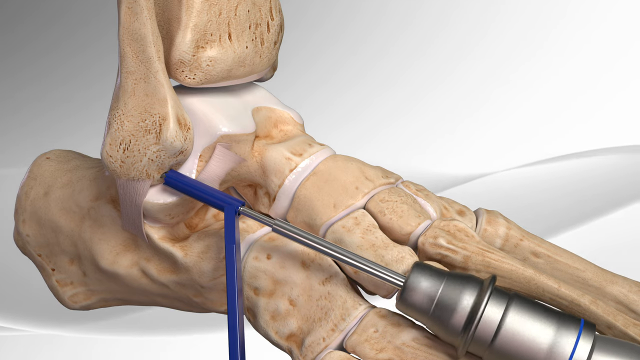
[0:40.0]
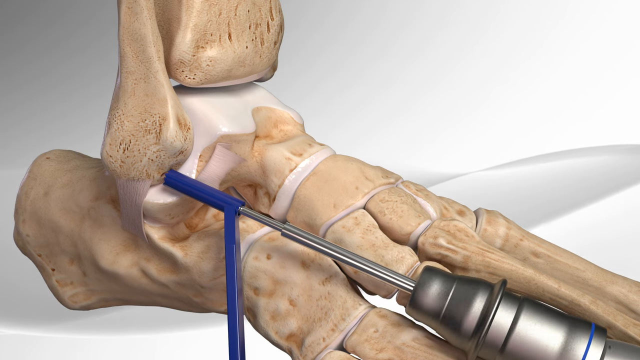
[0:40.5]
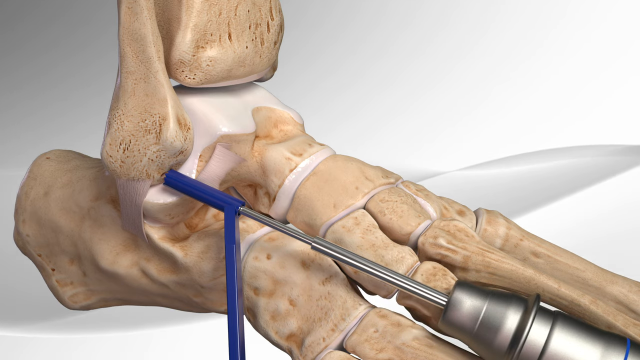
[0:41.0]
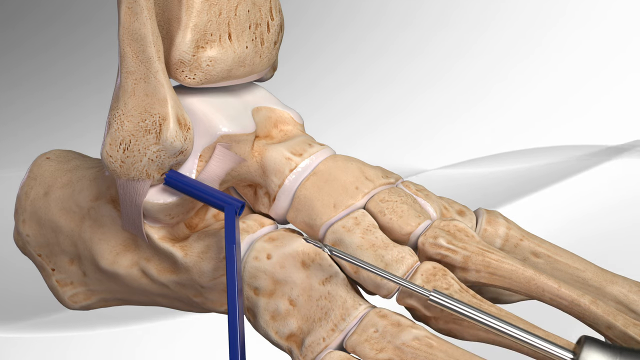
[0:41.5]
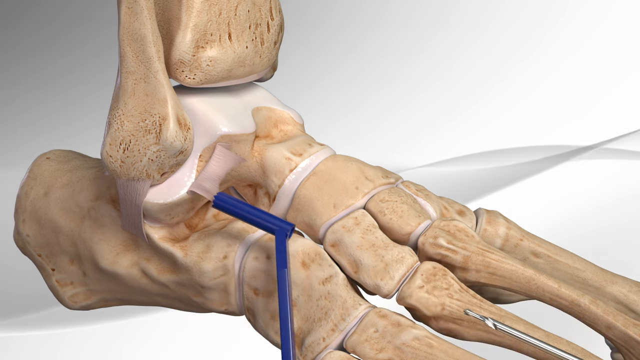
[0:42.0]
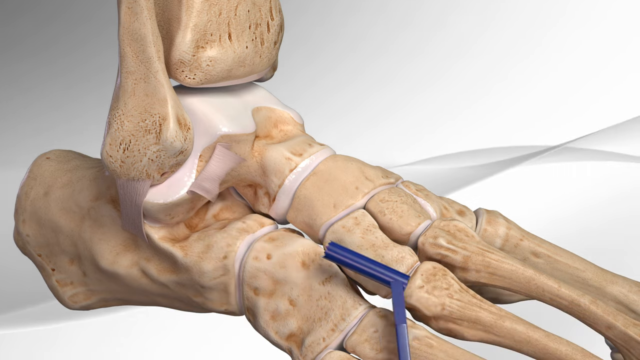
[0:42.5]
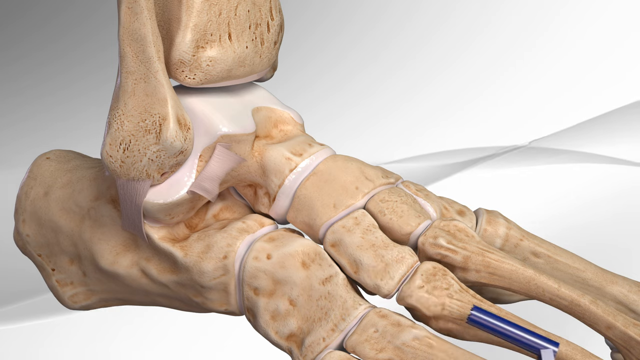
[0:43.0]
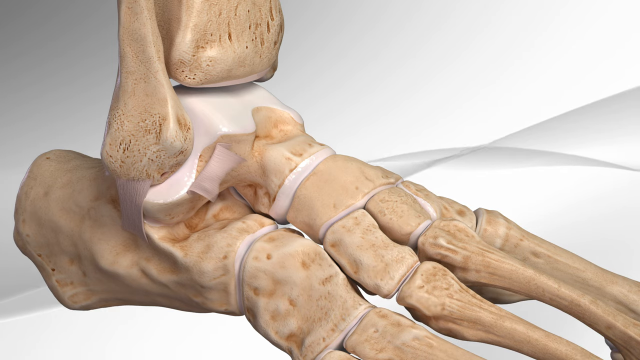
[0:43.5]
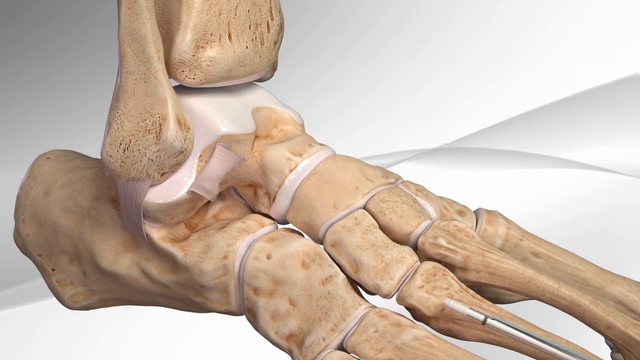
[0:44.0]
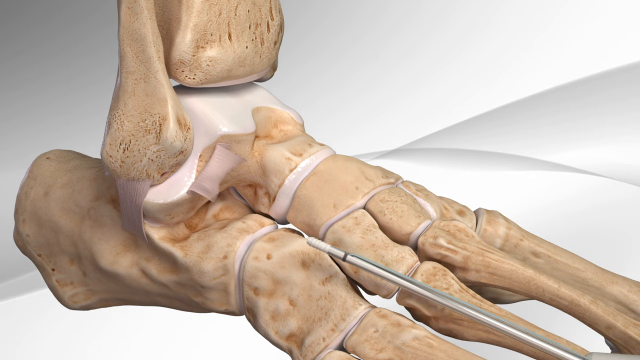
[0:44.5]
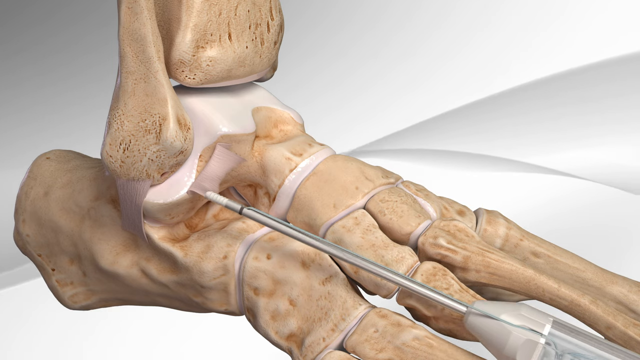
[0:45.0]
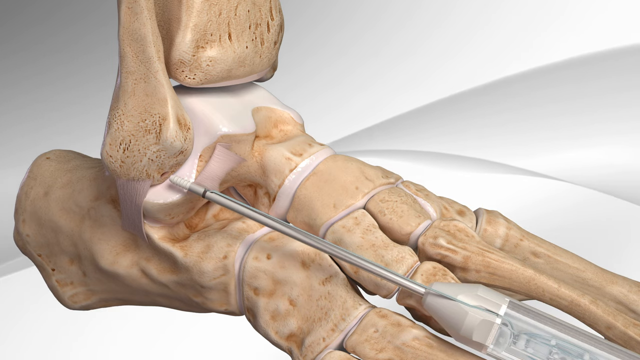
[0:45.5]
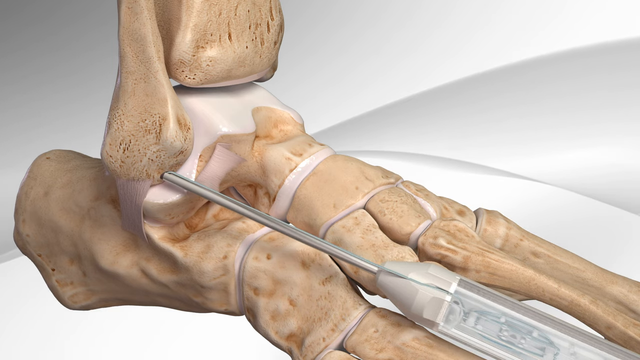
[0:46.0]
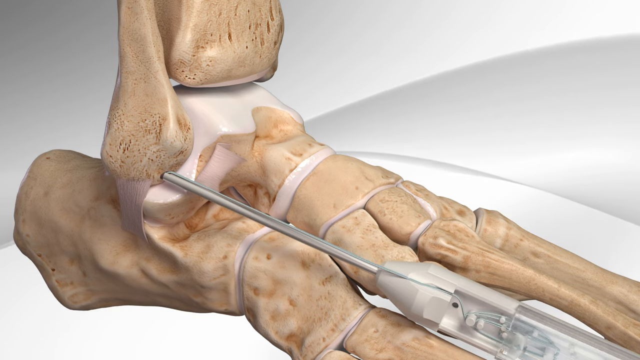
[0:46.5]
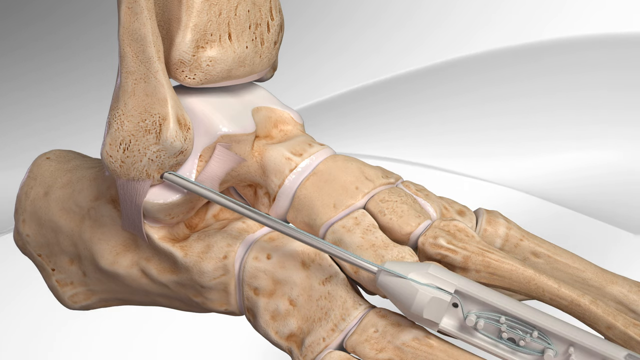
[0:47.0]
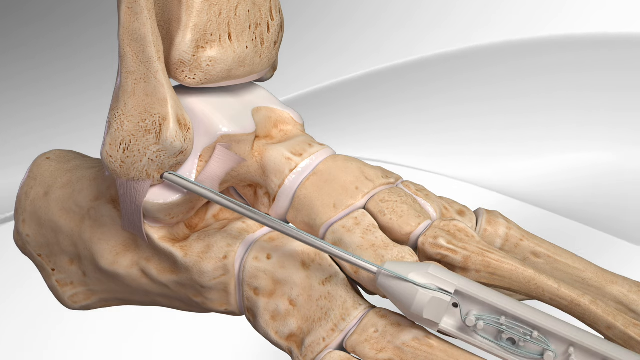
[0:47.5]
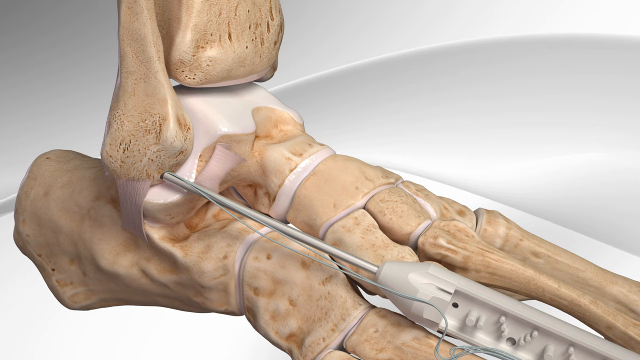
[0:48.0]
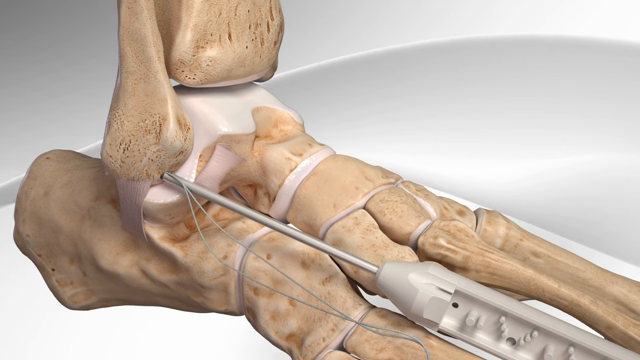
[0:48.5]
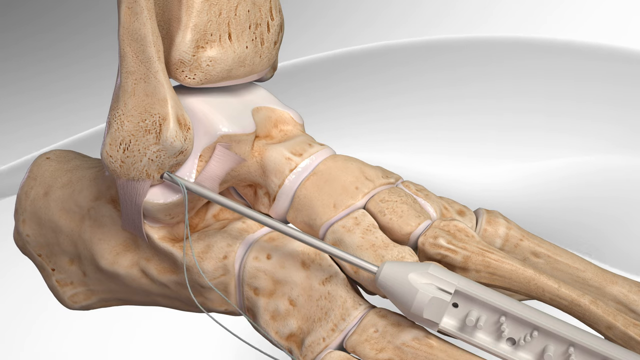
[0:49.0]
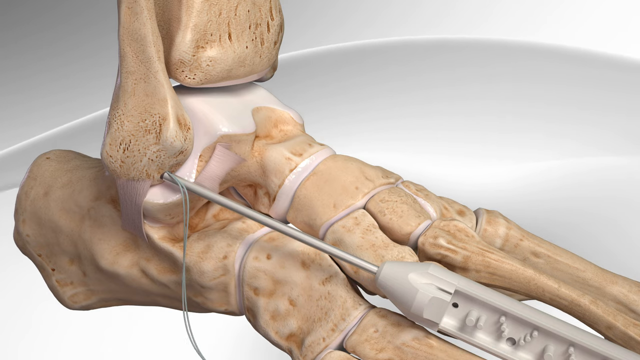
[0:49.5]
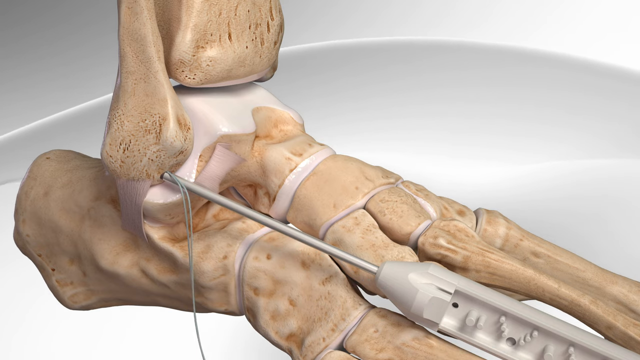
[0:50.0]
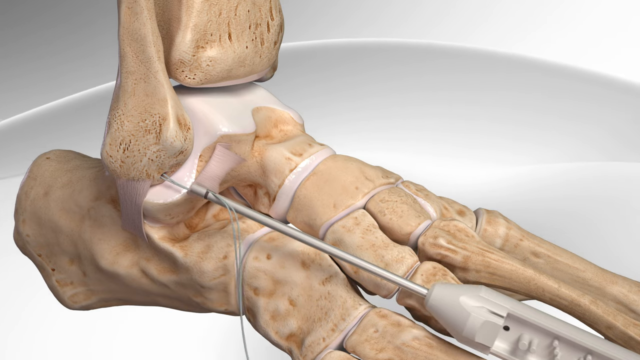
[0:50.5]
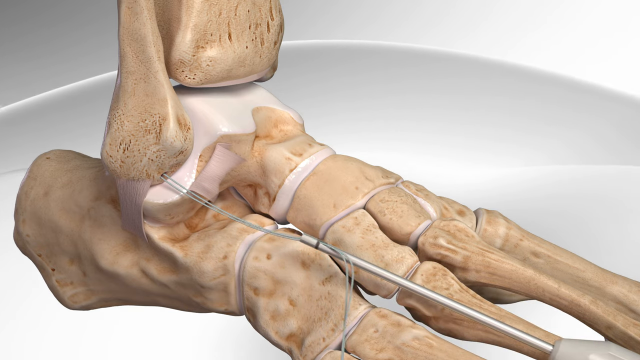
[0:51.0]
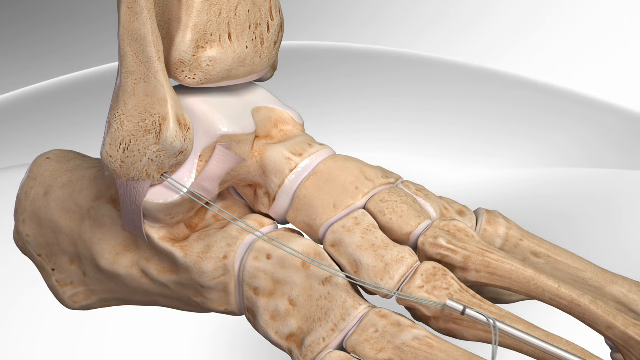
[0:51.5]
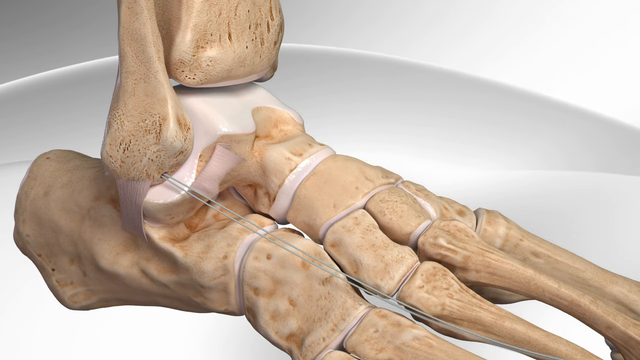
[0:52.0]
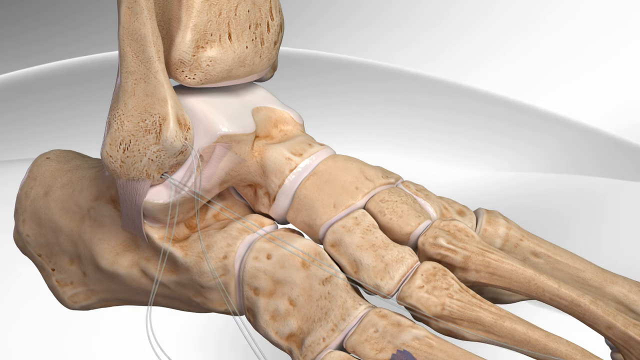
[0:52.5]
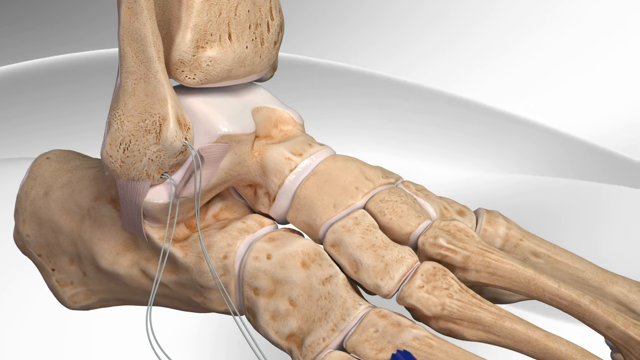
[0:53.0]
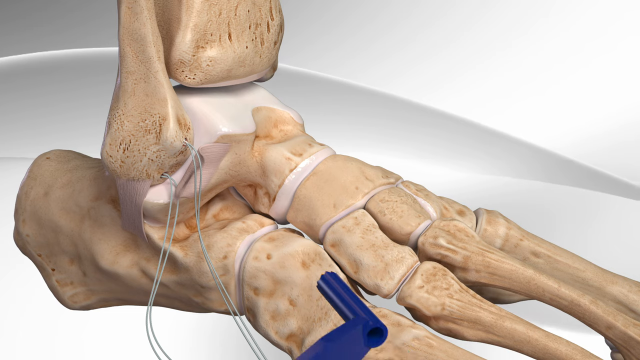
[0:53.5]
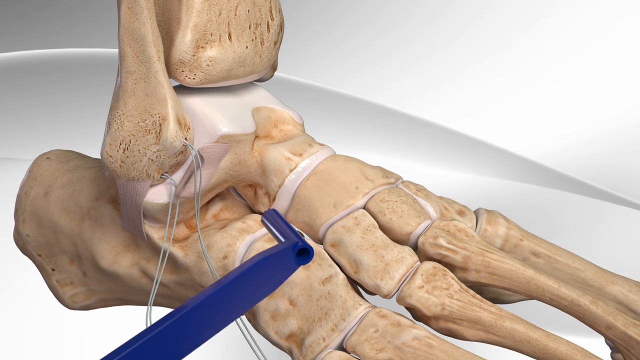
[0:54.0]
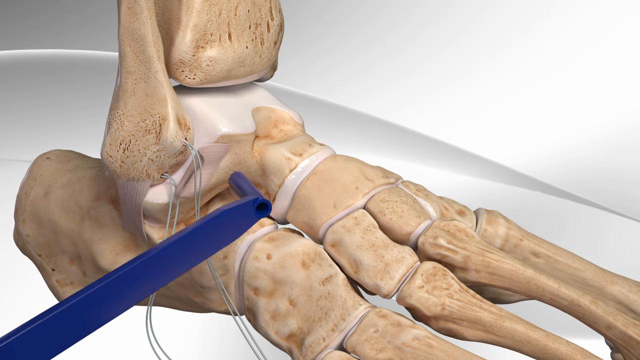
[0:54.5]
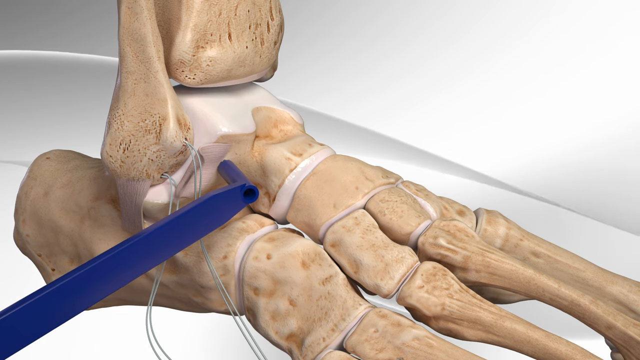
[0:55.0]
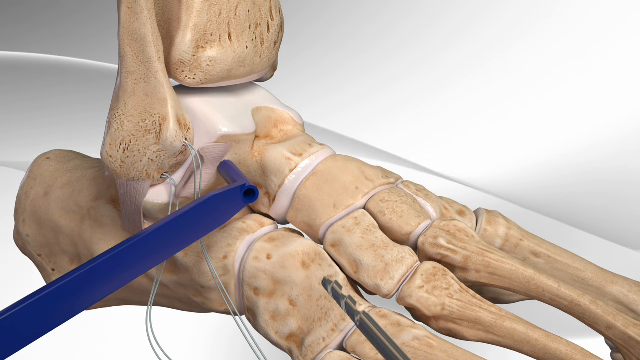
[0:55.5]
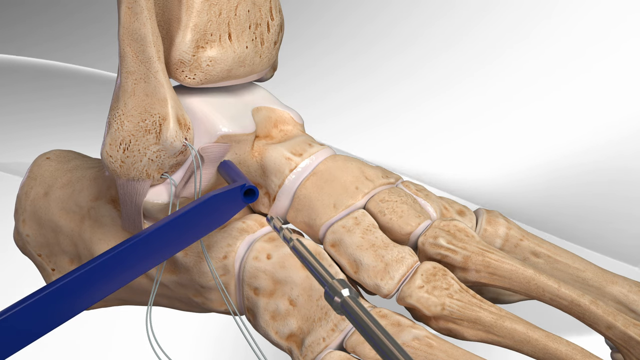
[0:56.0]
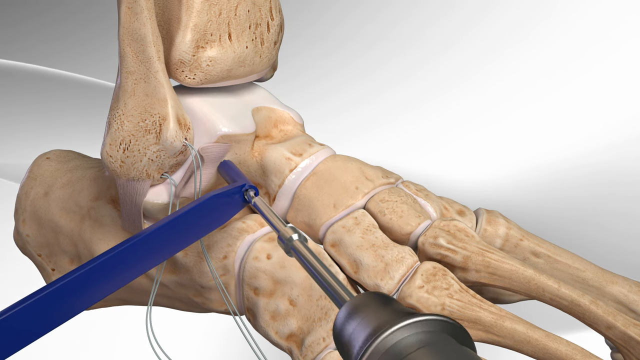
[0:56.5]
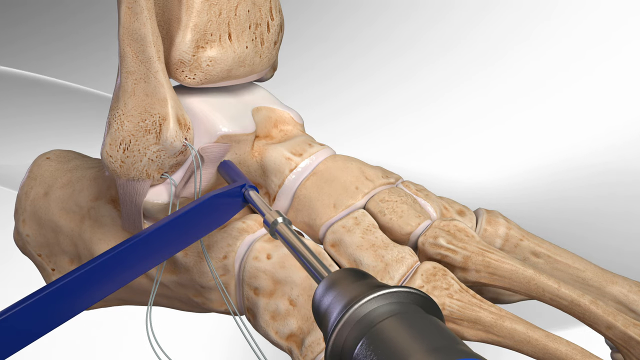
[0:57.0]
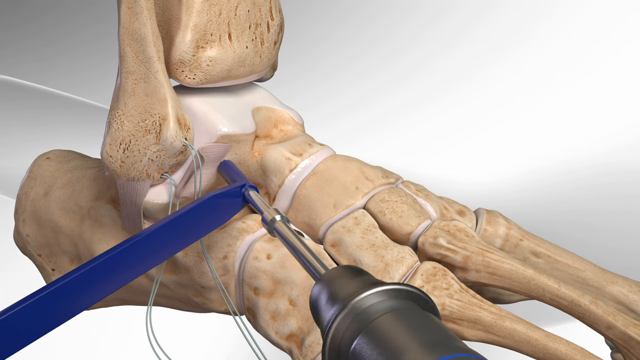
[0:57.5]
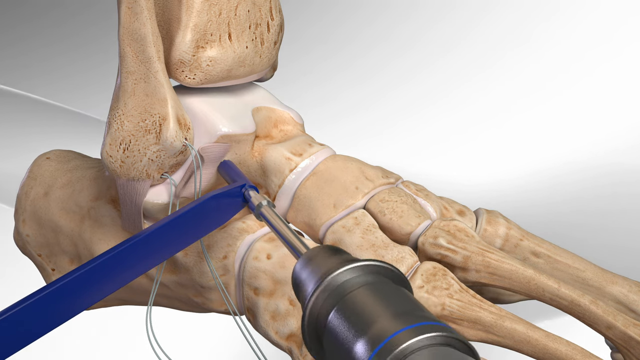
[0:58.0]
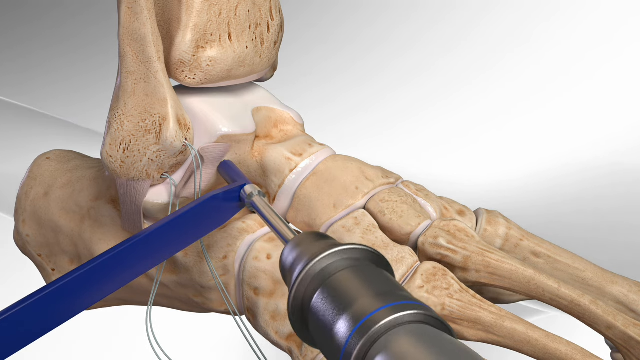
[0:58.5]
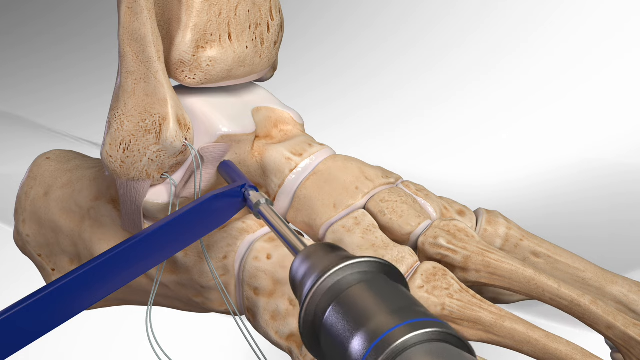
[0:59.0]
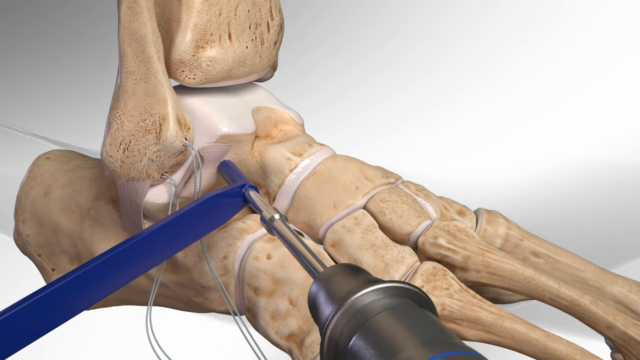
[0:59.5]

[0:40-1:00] The drill, which has been drilling through the blue hollow instrument, retracts and pulls back out of the bone, and the blue instrument also pulls back out of the image. Another instrument, not necessarily a drill, goes into the newly made hole and appears to place some kind of wires or sensors into the bone, then retracts while the wires stay in. Two holes in the same bone now have these wires coming out of them. The blue hollow instrument comes back in with the drill and drills another area nearby, in a different spot a little lower; no wires are shown being placed in this third hole.